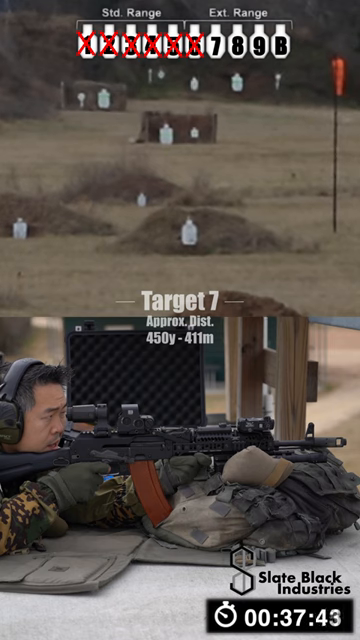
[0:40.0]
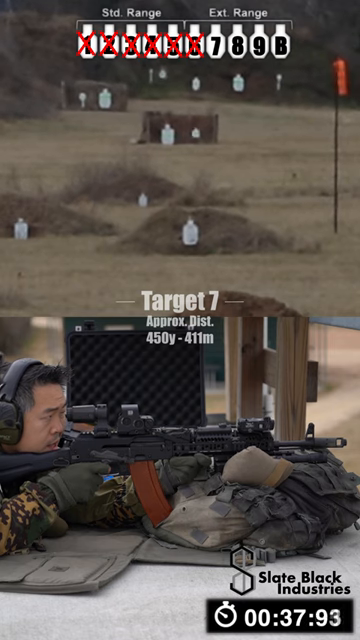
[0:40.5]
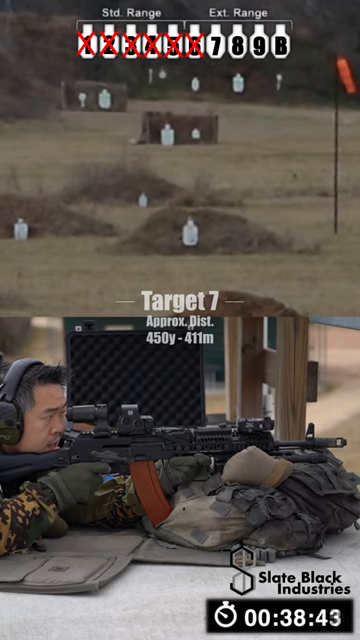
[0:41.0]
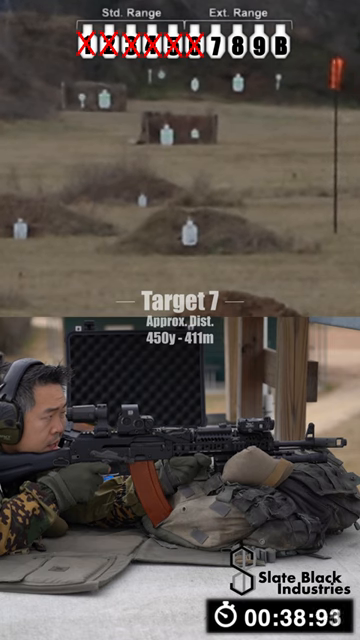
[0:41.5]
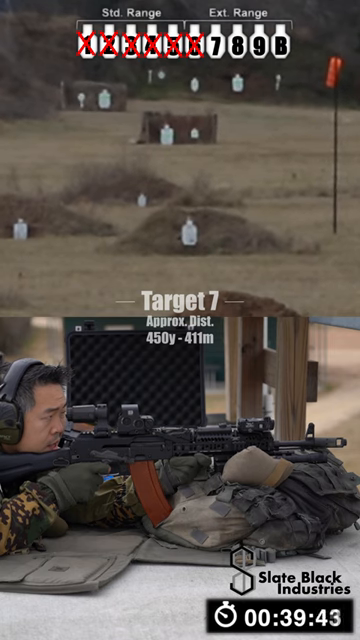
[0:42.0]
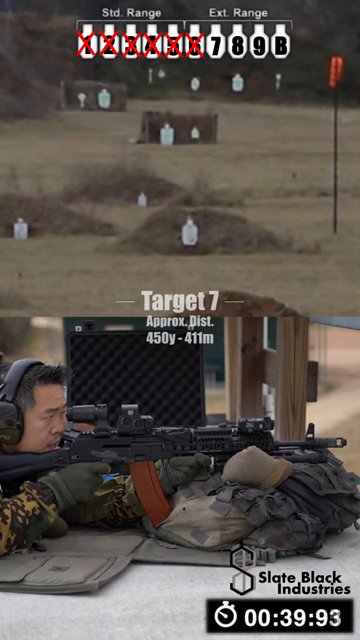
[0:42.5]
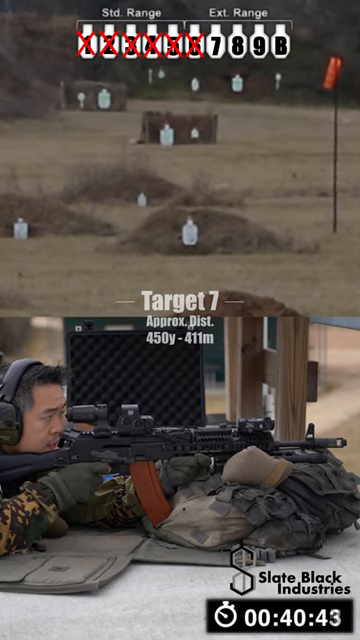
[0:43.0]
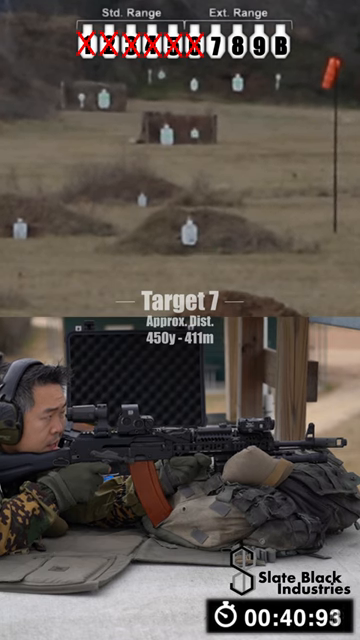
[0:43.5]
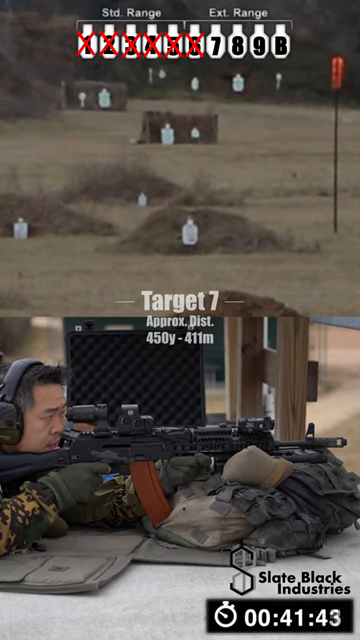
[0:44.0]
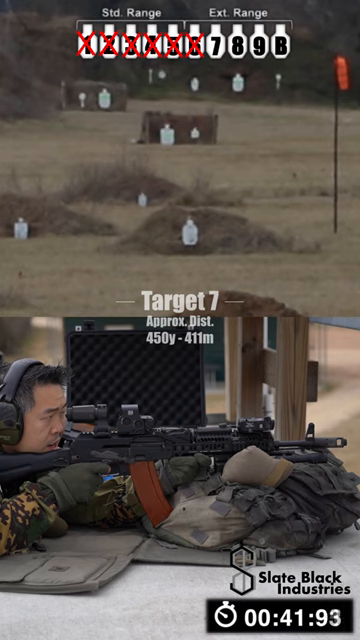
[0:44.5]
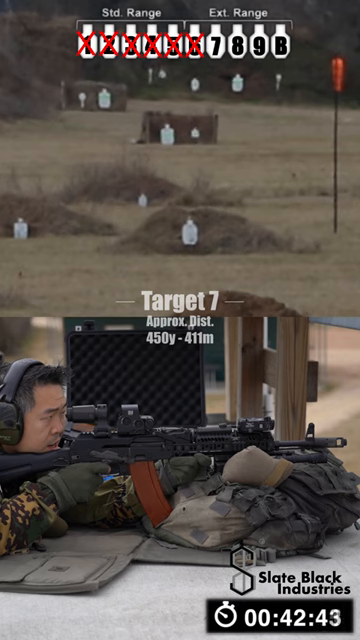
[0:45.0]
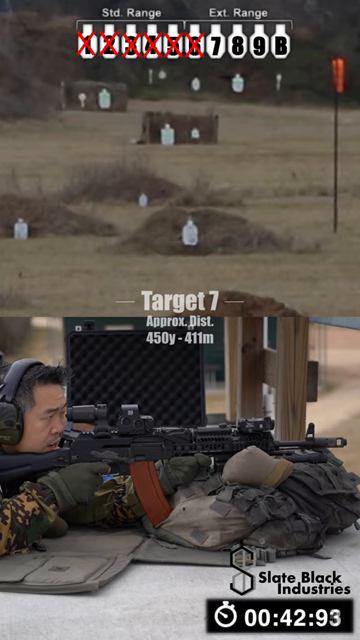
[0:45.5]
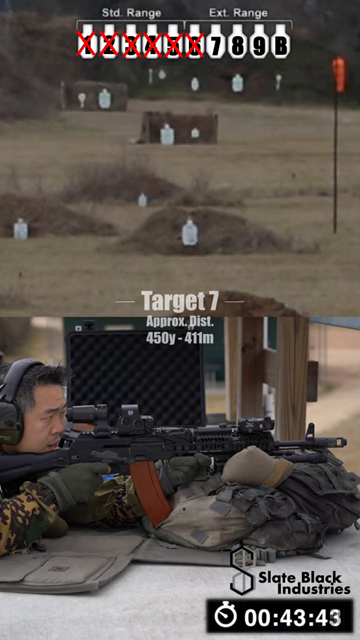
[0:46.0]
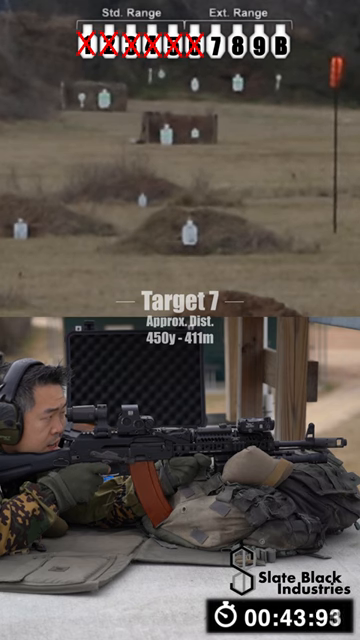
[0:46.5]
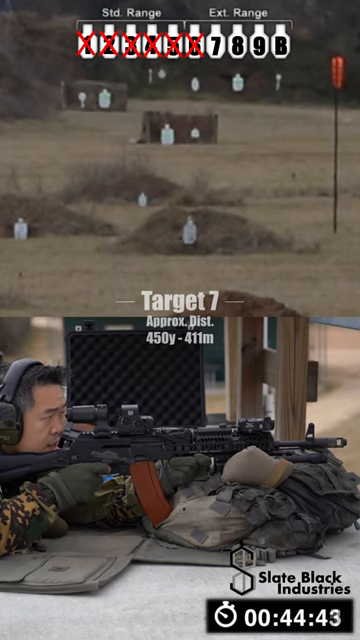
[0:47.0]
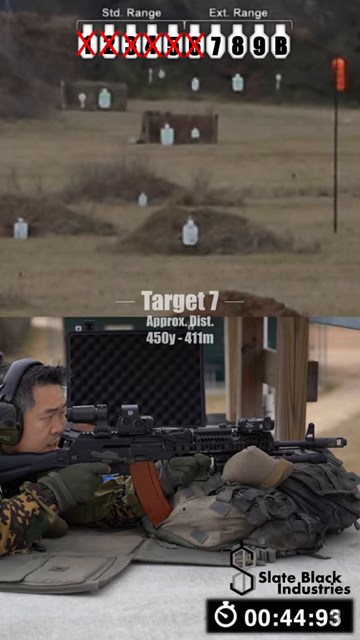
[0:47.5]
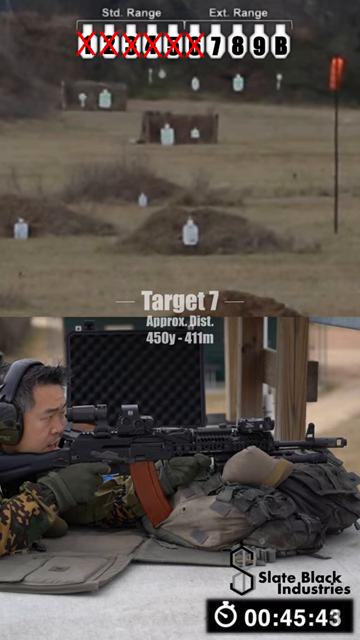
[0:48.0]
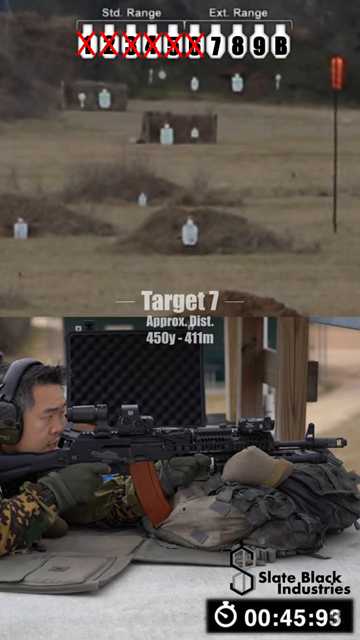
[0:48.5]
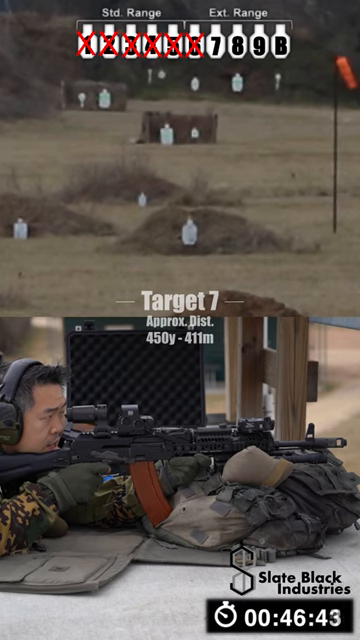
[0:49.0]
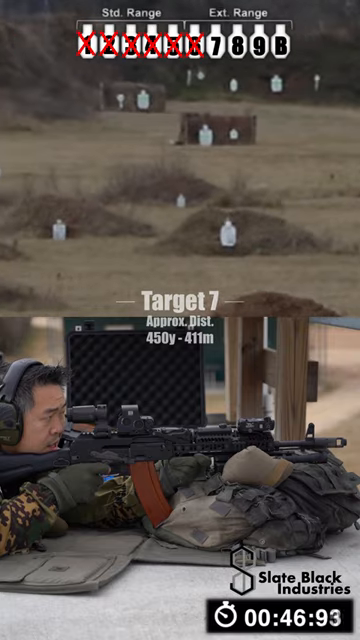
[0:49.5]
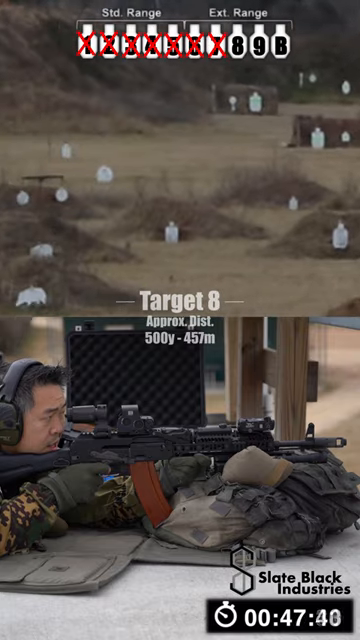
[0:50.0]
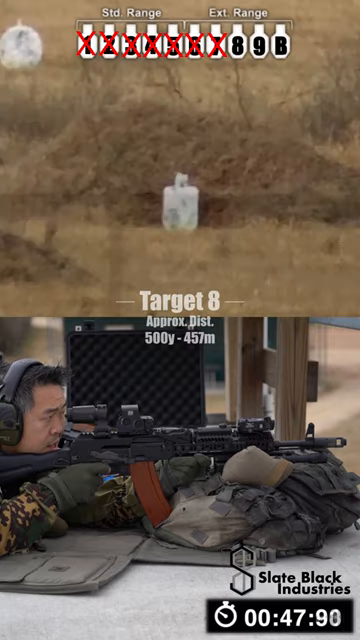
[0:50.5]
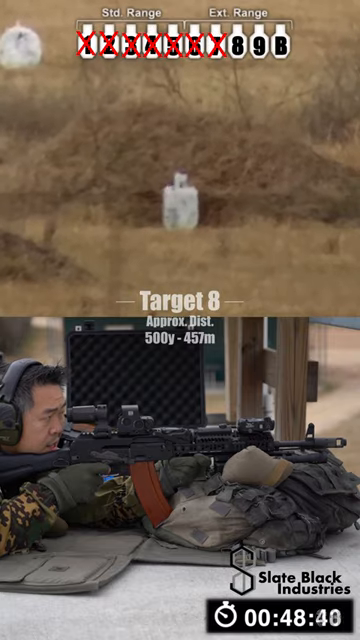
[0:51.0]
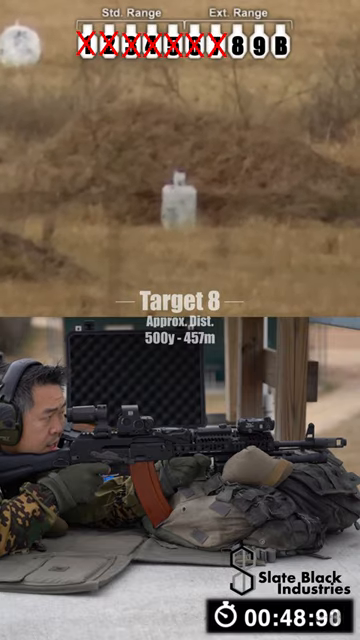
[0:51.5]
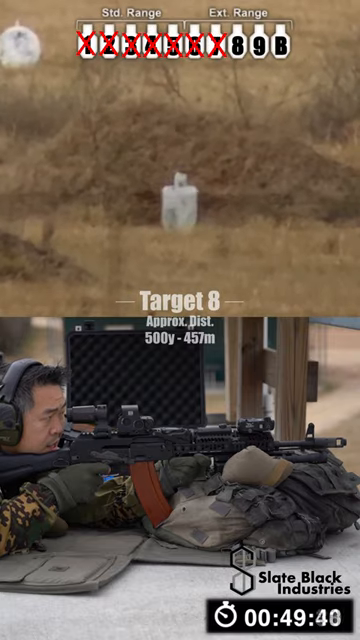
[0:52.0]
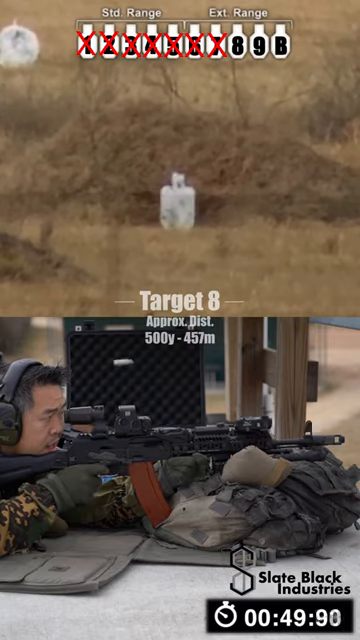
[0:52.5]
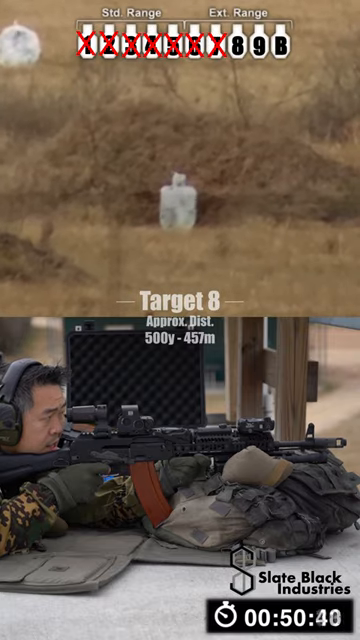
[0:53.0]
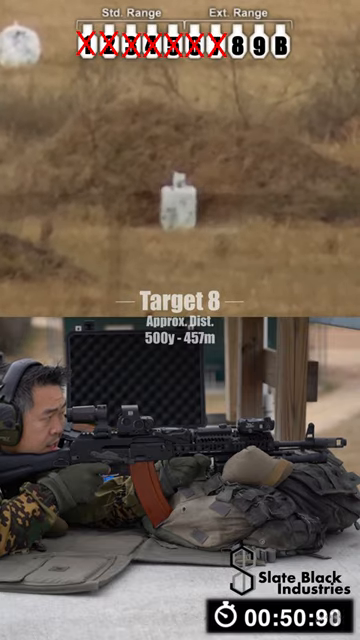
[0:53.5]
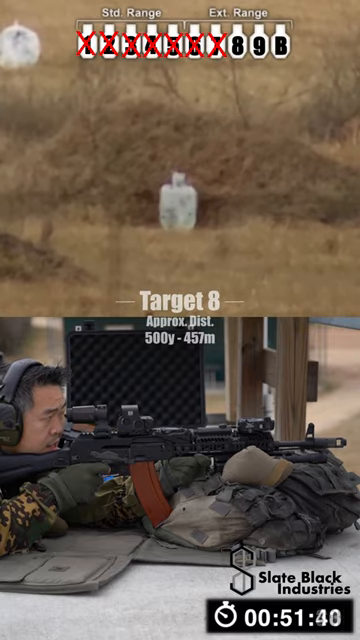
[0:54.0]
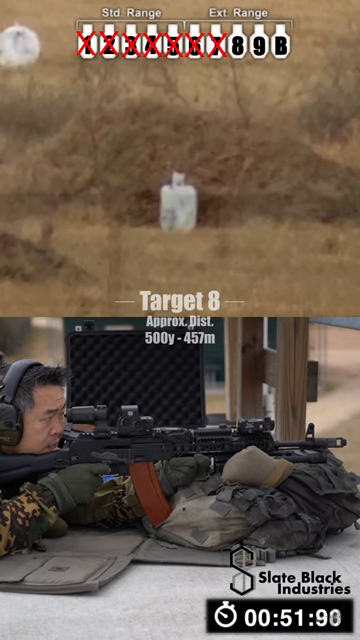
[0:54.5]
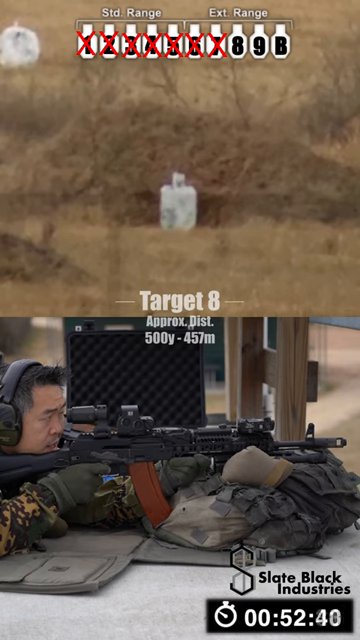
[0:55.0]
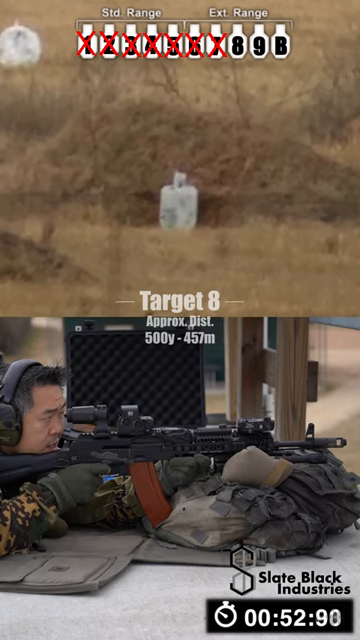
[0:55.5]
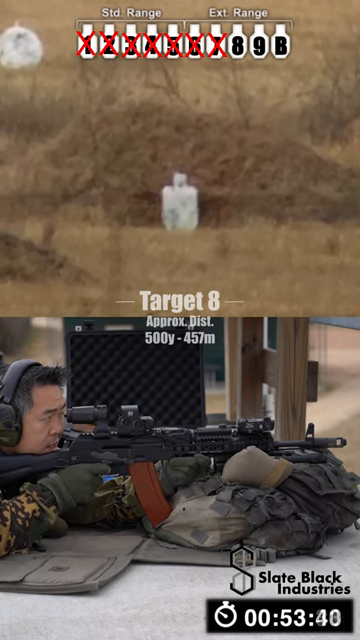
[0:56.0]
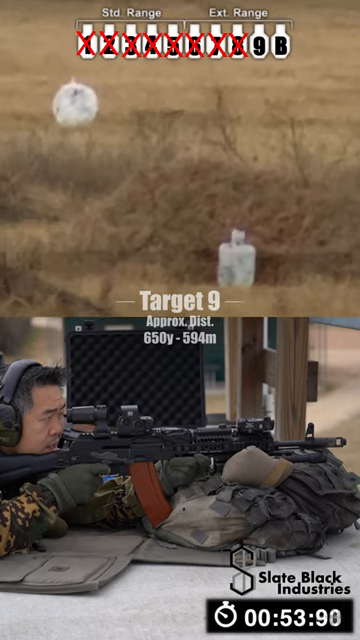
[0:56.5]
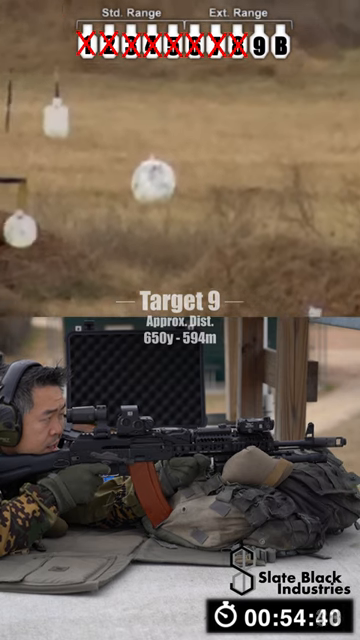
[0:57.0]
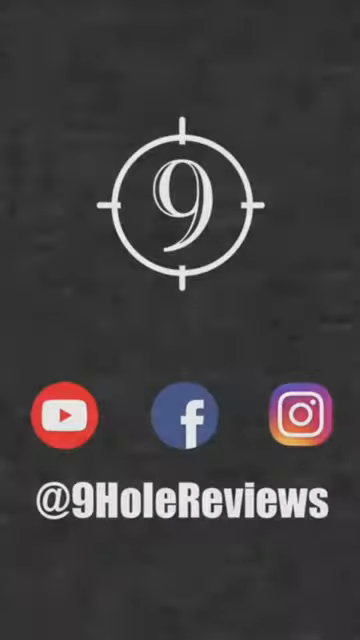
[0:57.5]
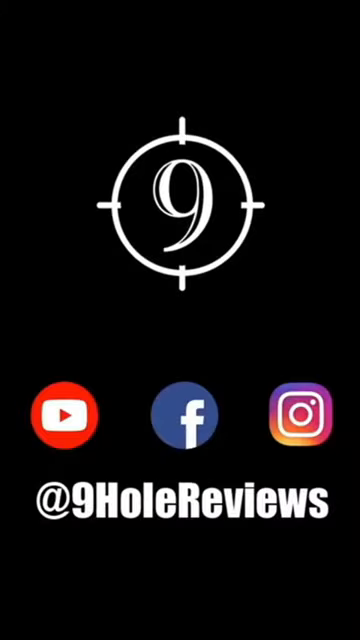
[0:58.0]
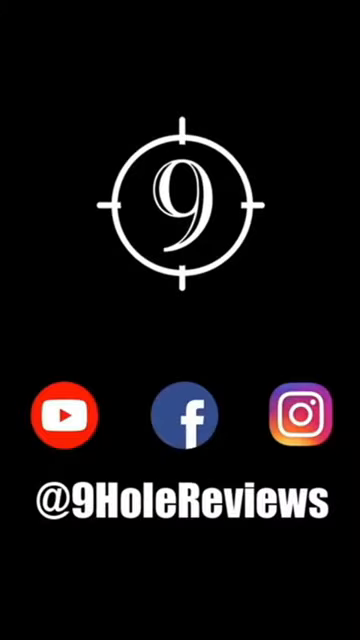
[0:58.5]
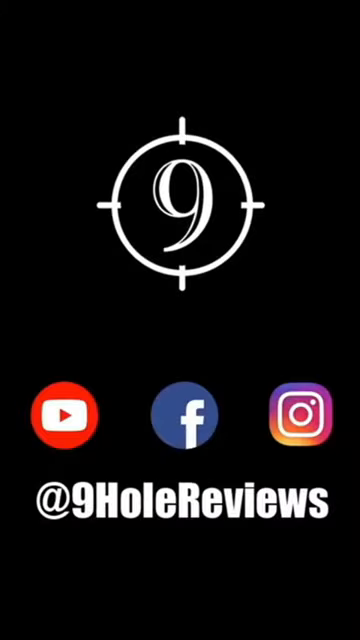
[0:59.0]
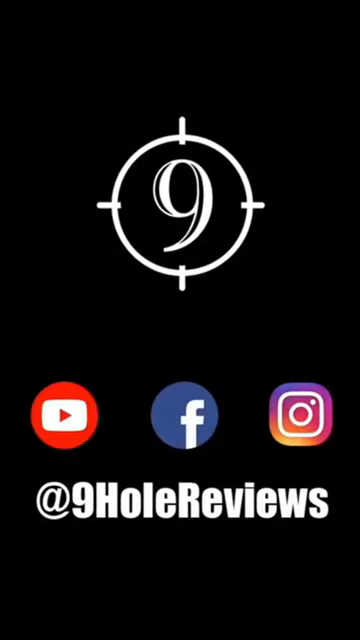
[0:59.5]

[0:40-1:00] The person is on target 7, at an approximate distance of 450 yards or 411 meters. Looking through the rifle's scope, the person stays very focused, and every so often the rifle shakes with recoil as a bullet casing ejects from its side. Target 6 is now crossed off, and in the top half several other targets are visible in the background, further away. A brown pole with an orange windsock on it is there, likely for gauging wind direction. The person in the bottom half keeps shooting at the different targets: target 7 is hit, then target 8 is worked on, and then target 9.